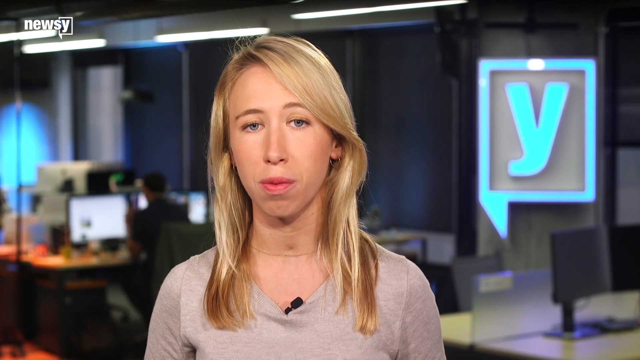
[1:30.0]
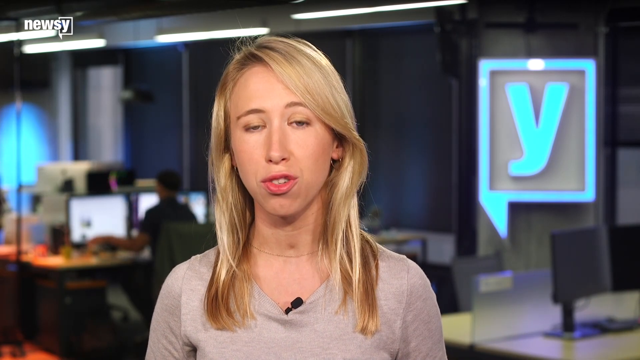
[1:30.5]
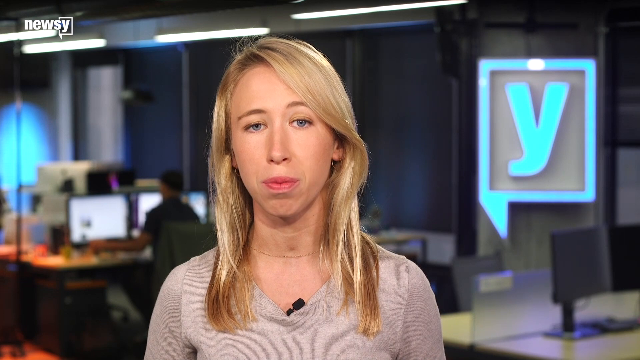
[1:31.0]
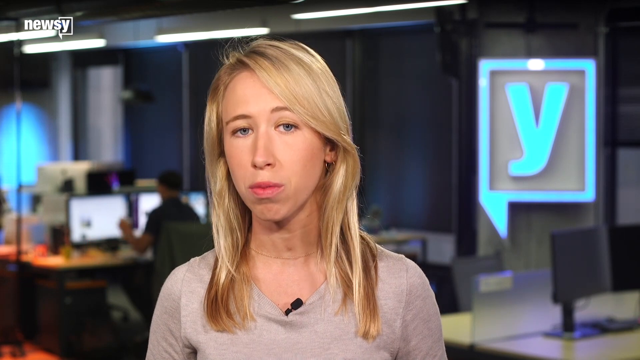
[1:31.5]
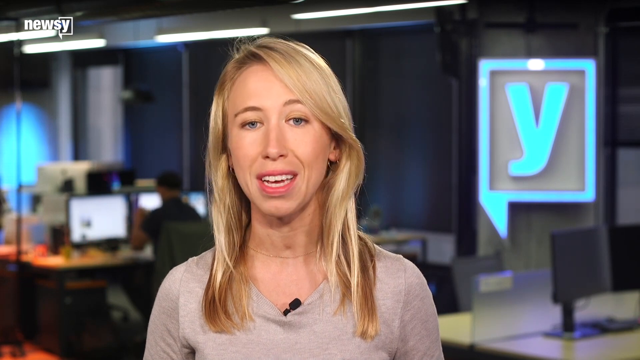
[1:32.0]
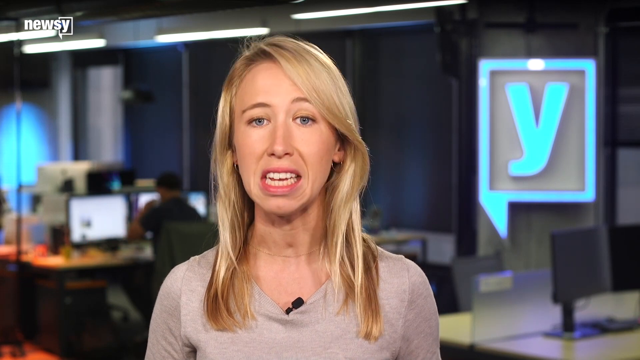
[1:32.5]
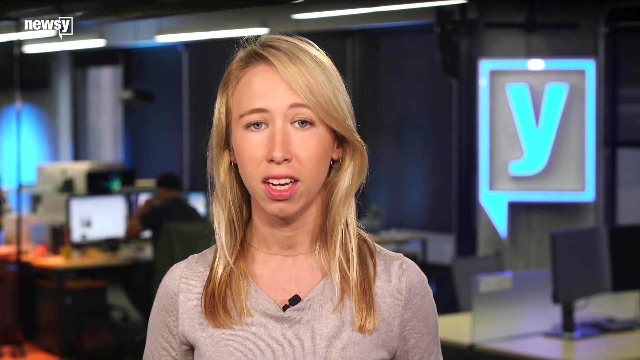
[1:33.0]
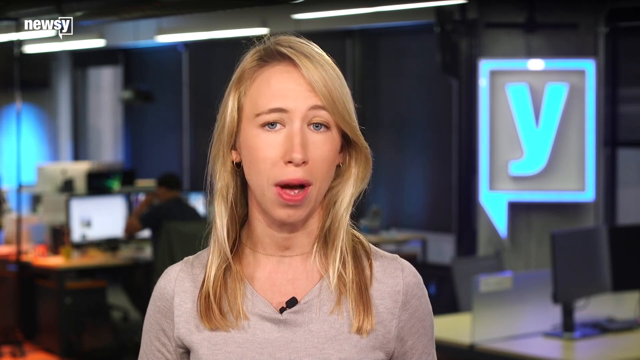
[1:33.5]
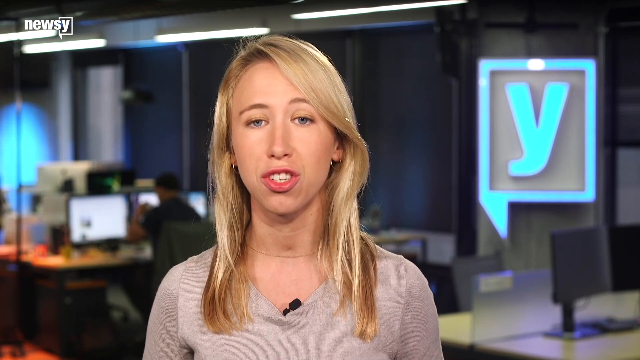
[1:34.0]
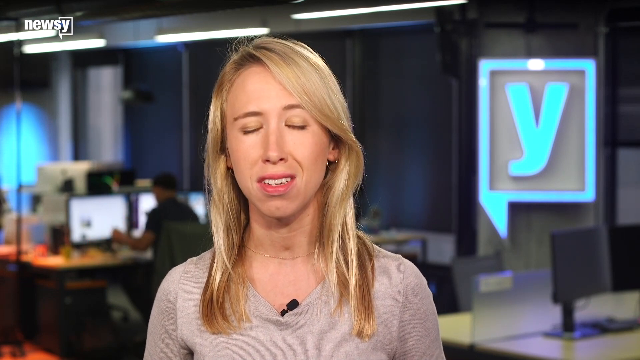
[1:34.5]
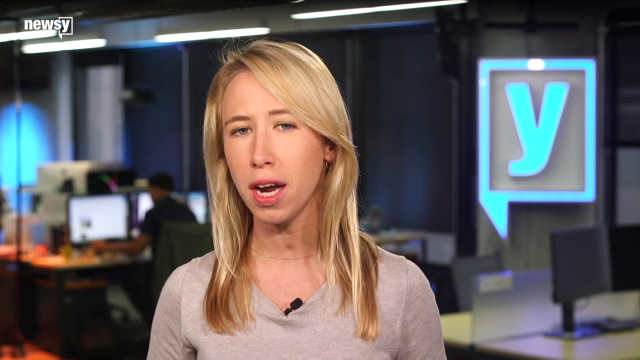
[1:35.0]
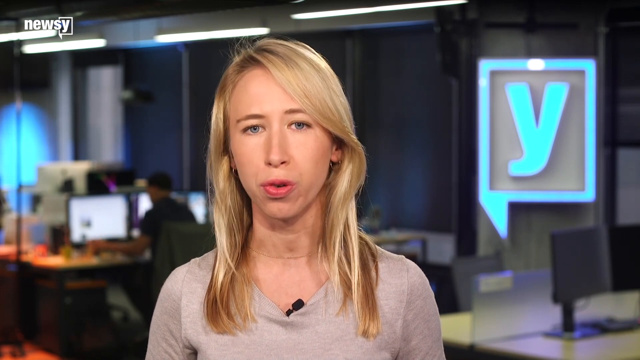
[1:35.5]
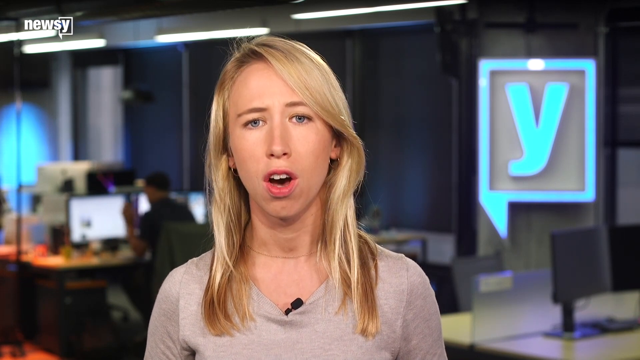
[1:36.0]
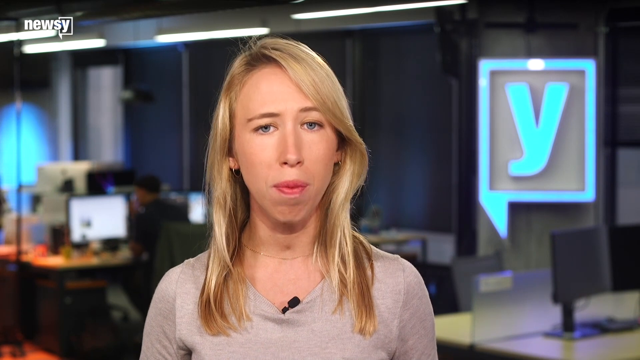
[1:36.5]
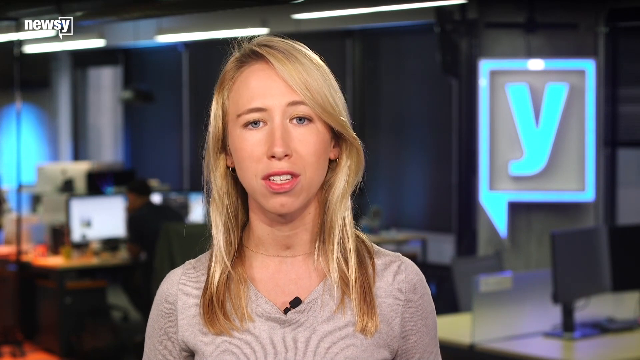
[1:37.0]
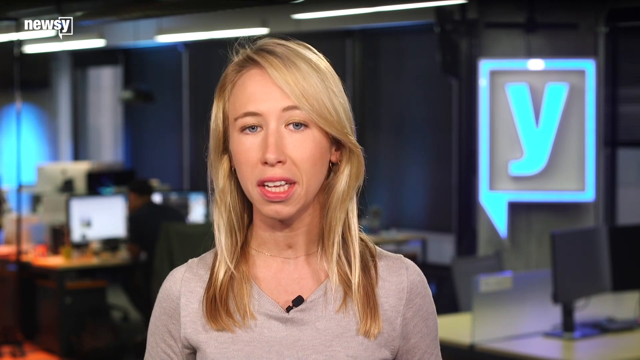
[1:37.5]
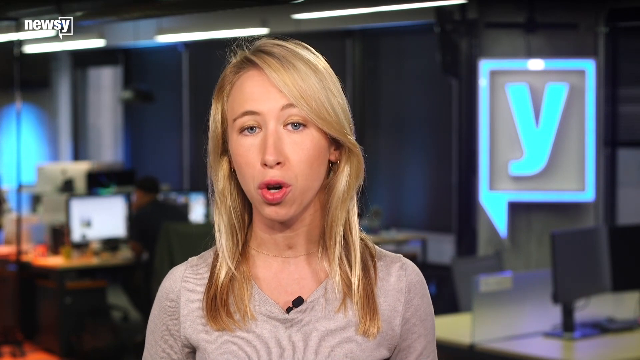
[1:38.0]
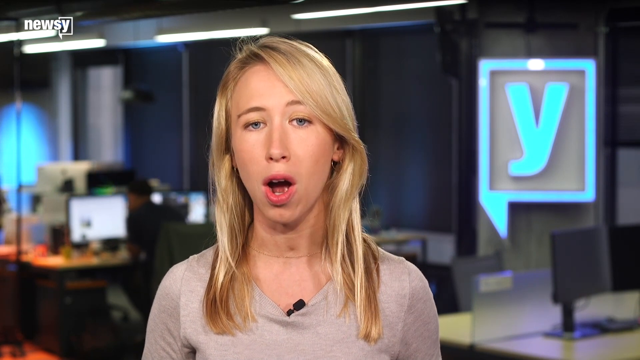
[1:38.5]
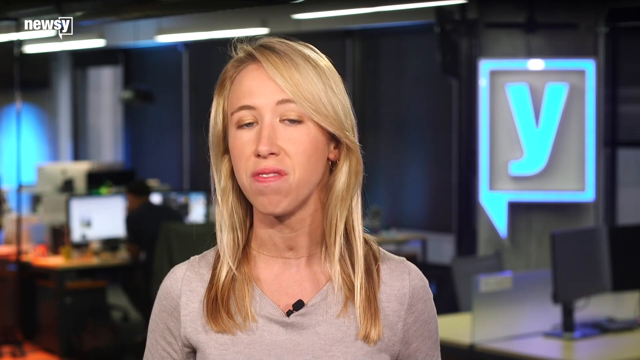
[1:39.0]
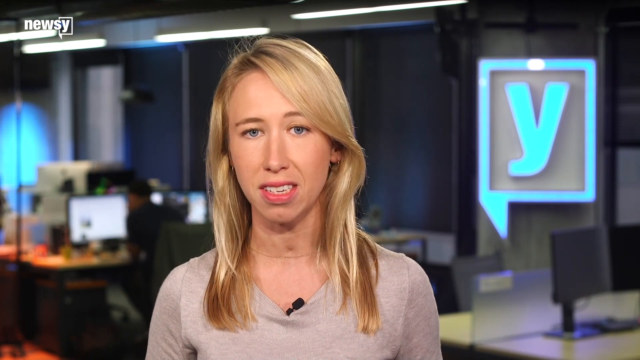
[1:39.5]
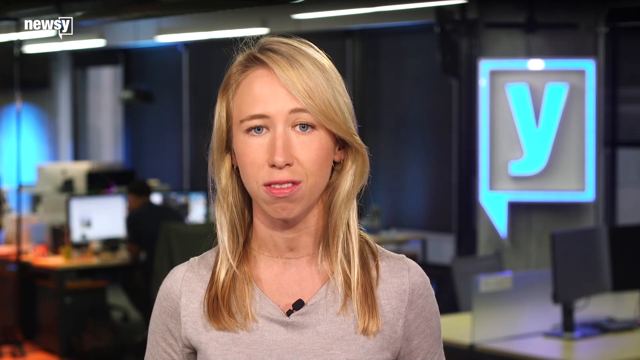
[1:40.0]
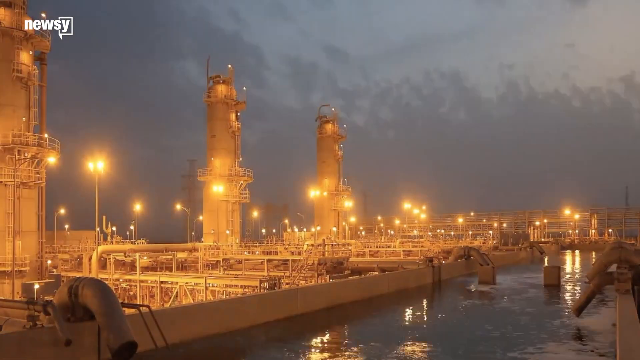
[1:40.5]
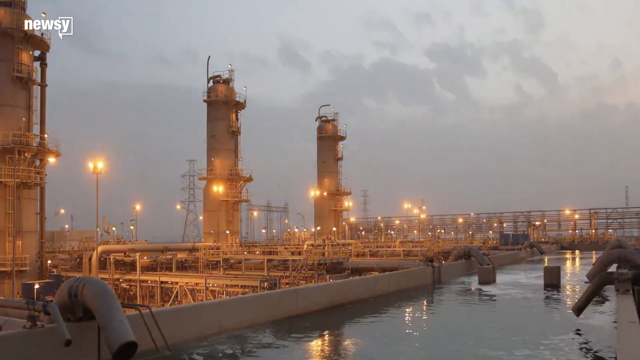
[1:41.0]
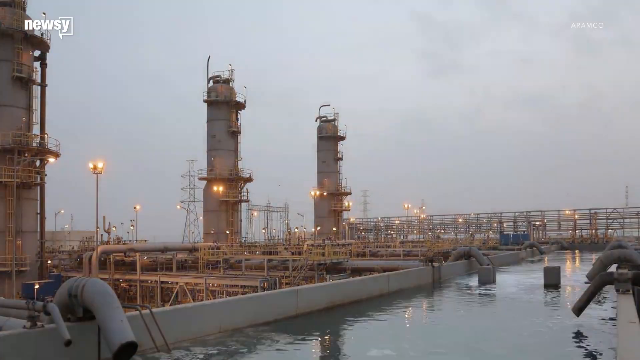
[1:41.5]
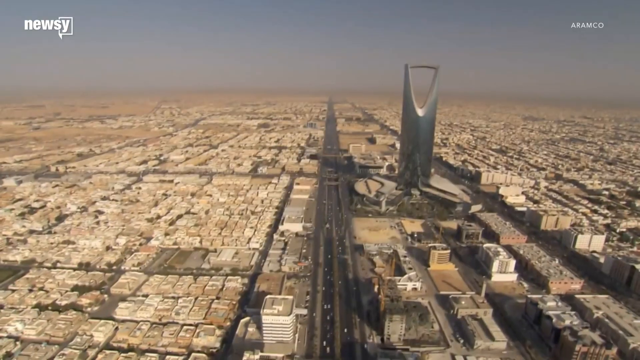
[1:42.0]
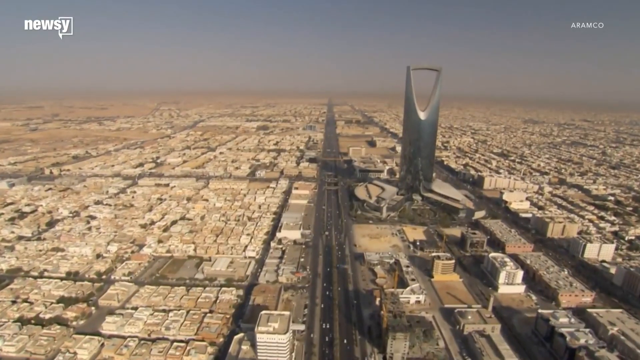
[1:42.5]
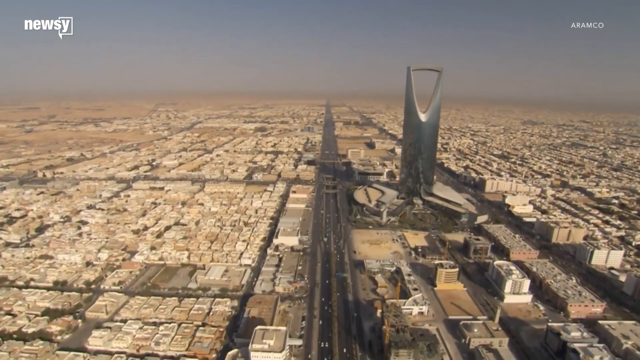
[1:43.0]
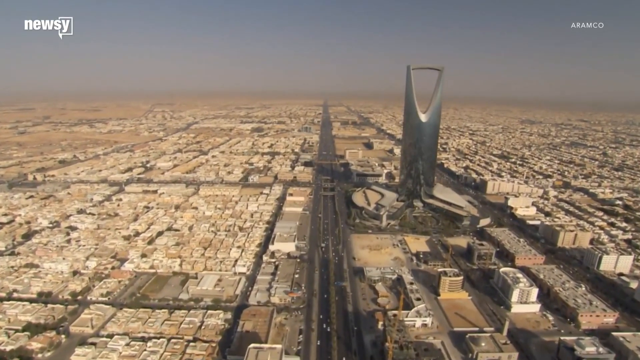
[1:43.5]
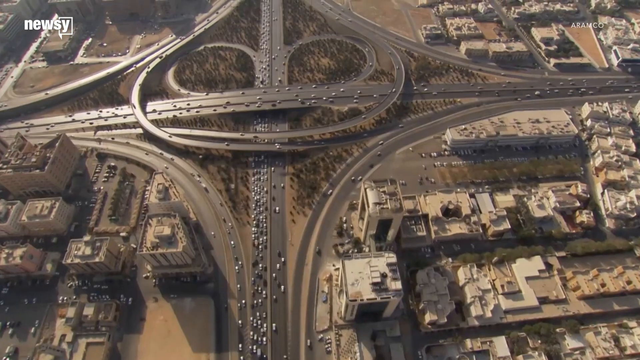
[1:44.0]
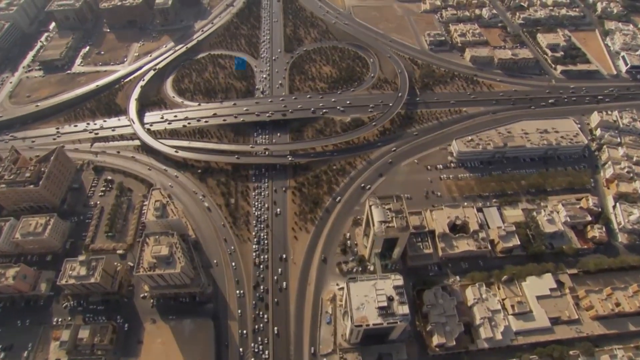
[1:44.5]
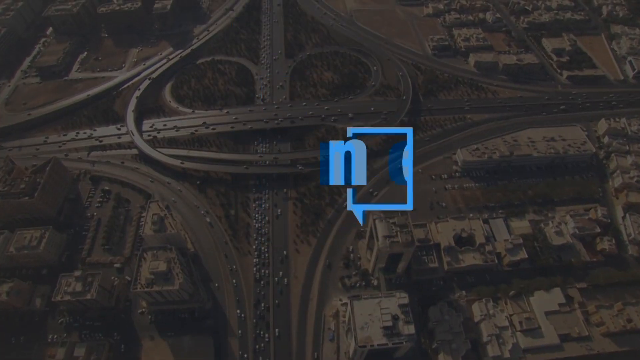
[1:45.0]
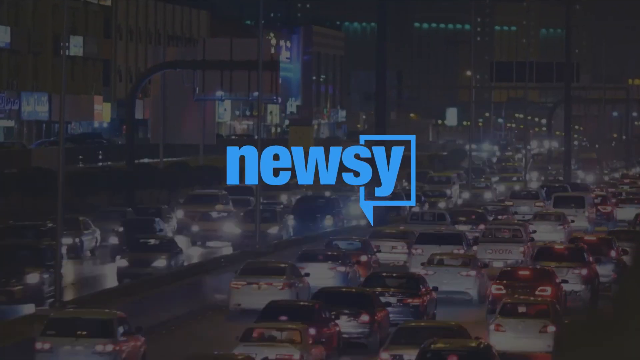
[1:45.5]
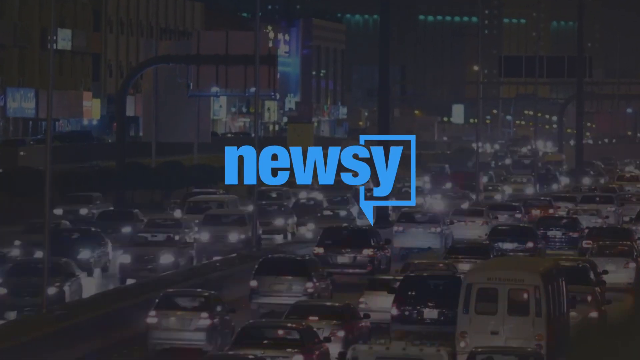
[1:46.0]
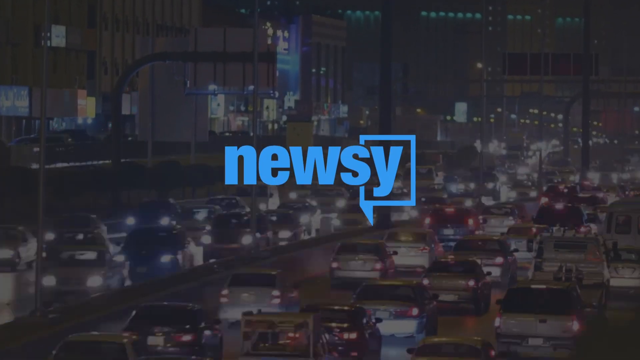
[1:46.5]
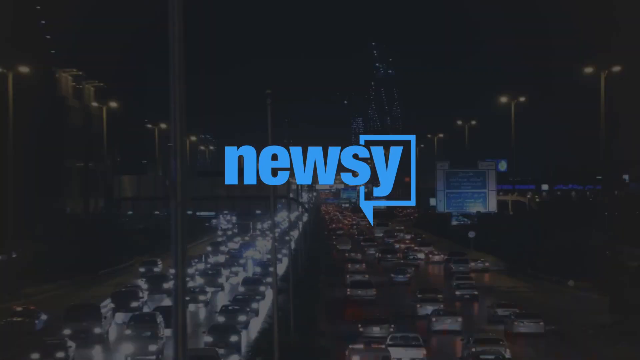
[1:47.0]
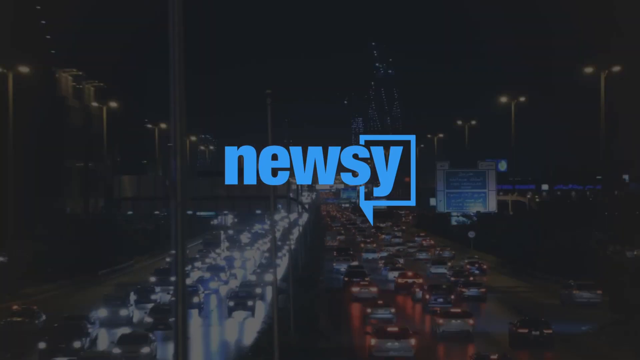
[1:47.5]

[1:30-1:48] The newscaster is talking, and she is also wearing a gold choker necklace. A nighttime shot of oil refinery plants follows: at twilight under a gray sky, the silver cylindrical structures look gold-colored, there seems to be a giant pool of water, and lots of floodlight-like lights glow kind of yellowish. Night turns to day as clouds go across the sky. An aerial shot then shows some sort of Middle Eastern city that looks huge, vast, and very dense from this angle, followed by an overhead shot of the ribbon part of highway exits. Finally, the Newsy logo appears in blue in the middle of the screen as the video ends.